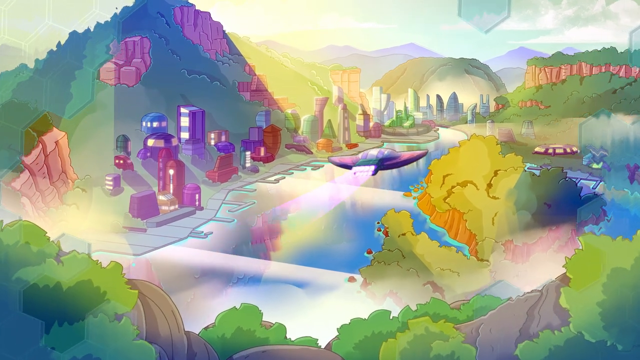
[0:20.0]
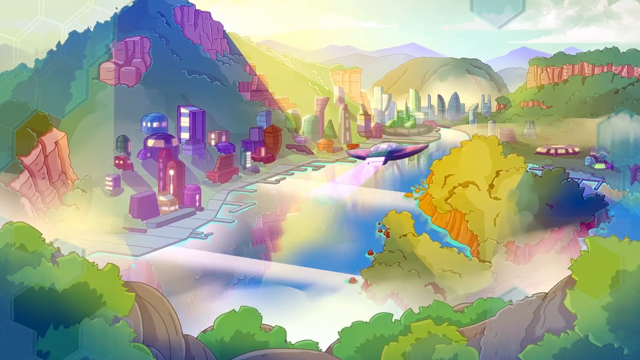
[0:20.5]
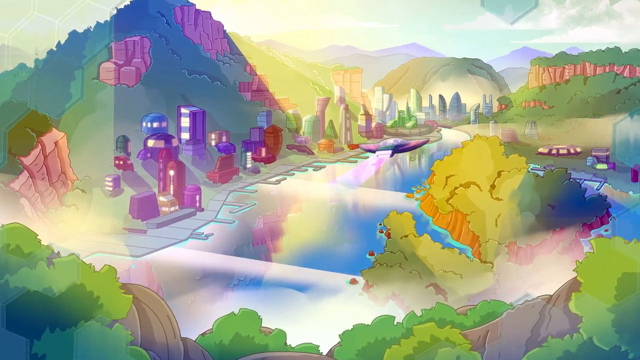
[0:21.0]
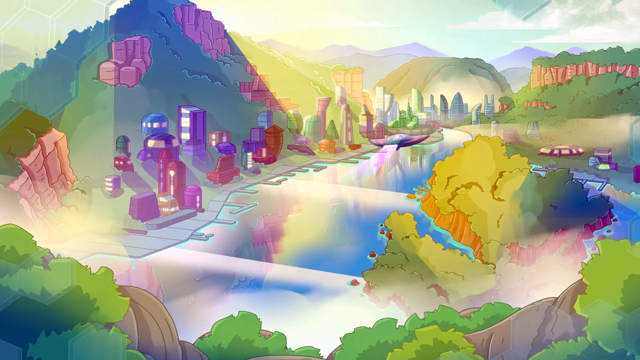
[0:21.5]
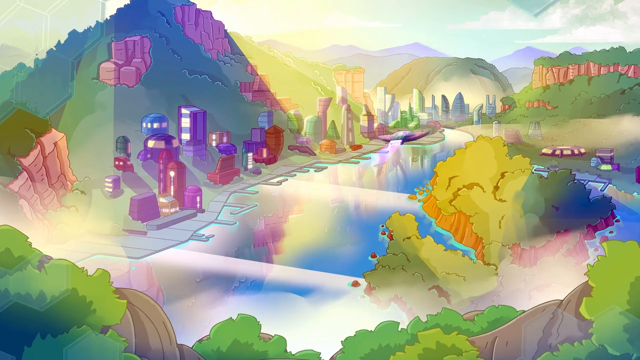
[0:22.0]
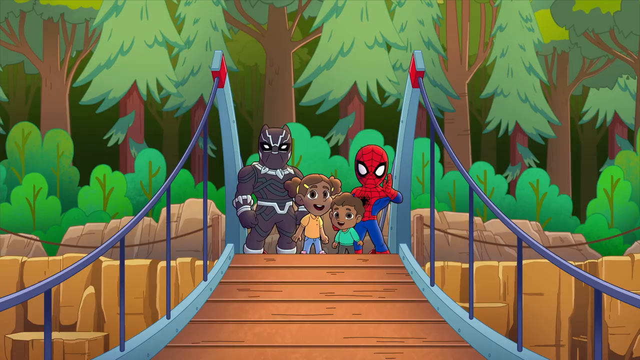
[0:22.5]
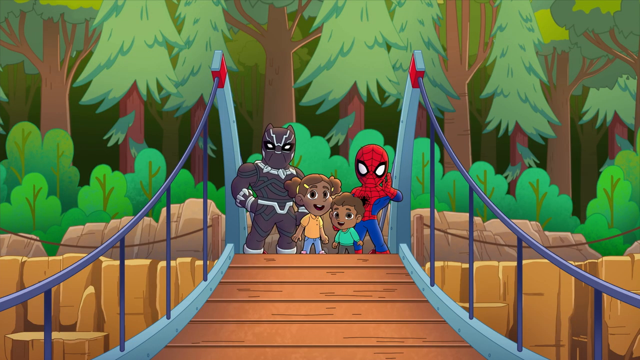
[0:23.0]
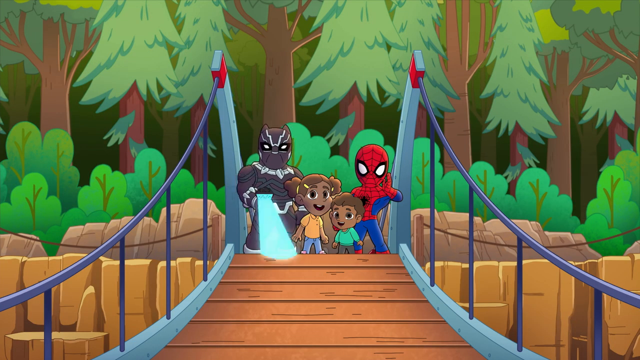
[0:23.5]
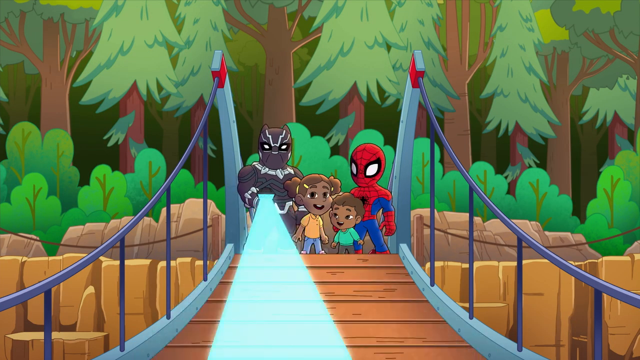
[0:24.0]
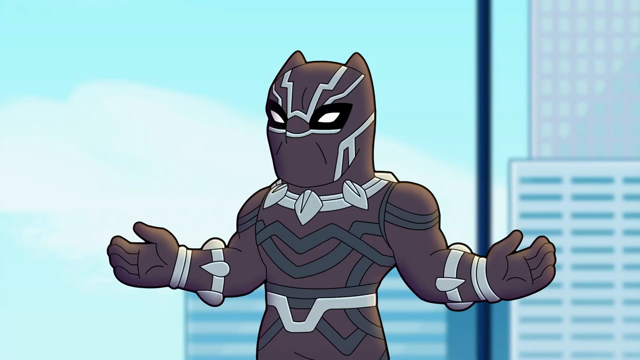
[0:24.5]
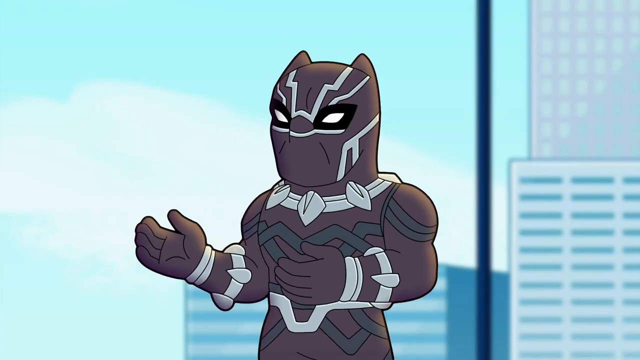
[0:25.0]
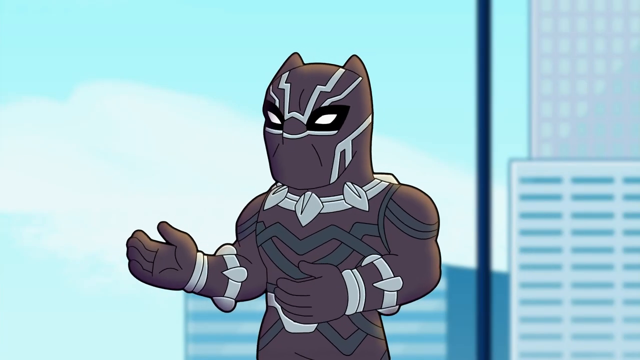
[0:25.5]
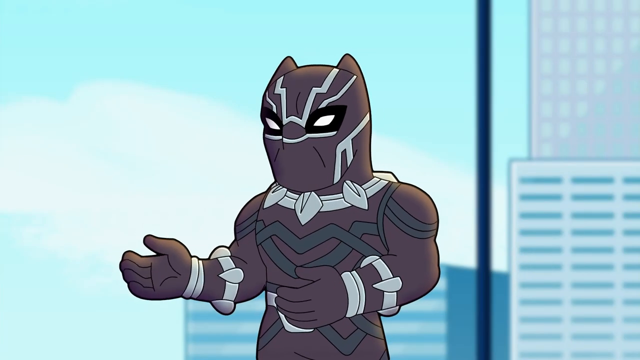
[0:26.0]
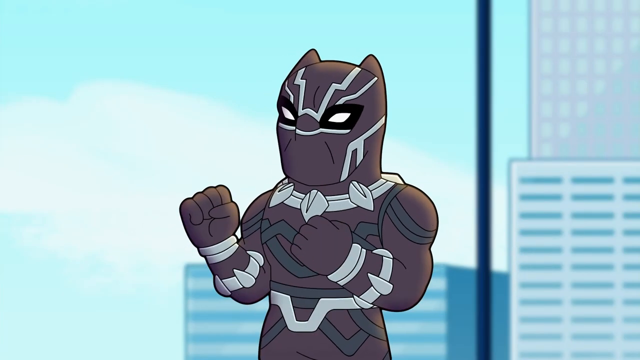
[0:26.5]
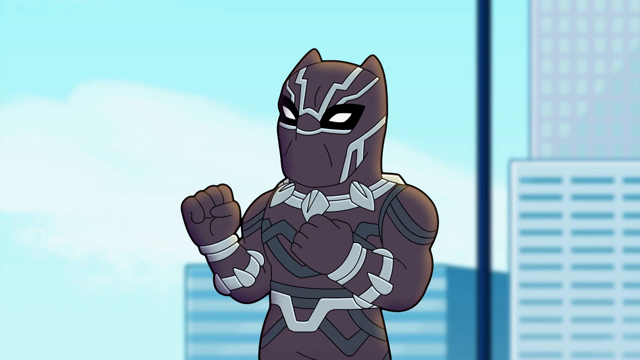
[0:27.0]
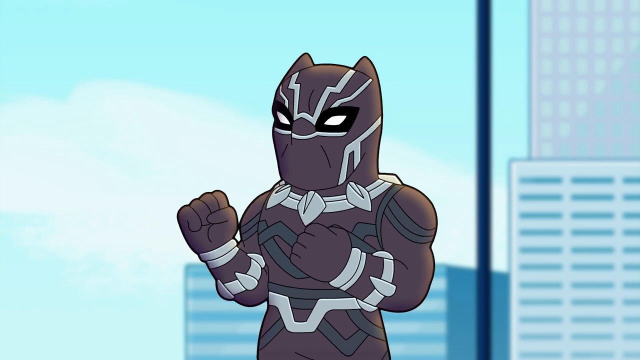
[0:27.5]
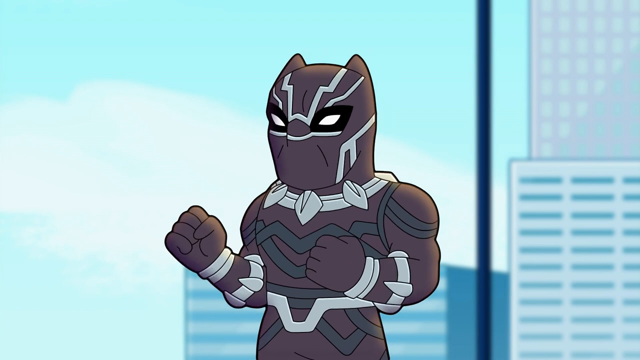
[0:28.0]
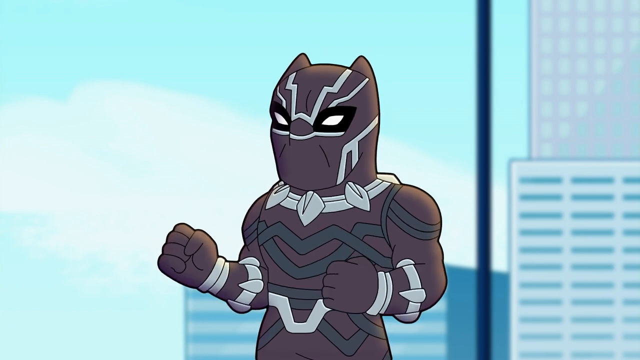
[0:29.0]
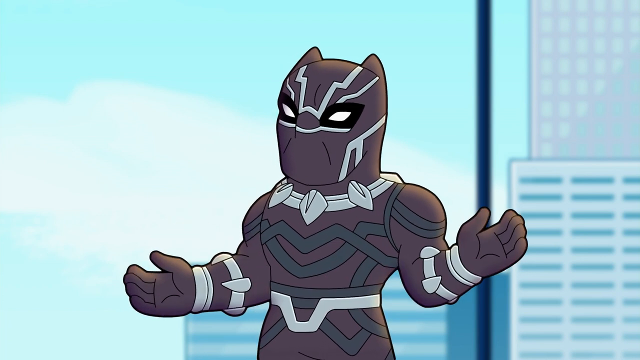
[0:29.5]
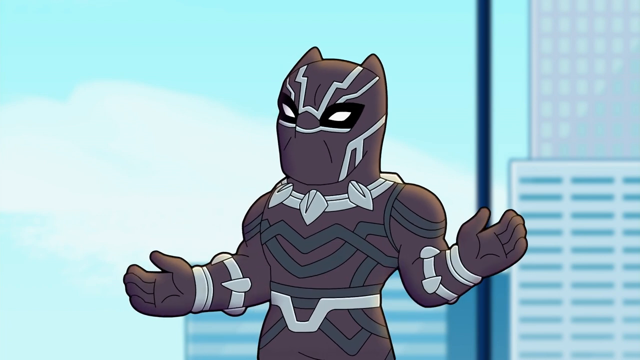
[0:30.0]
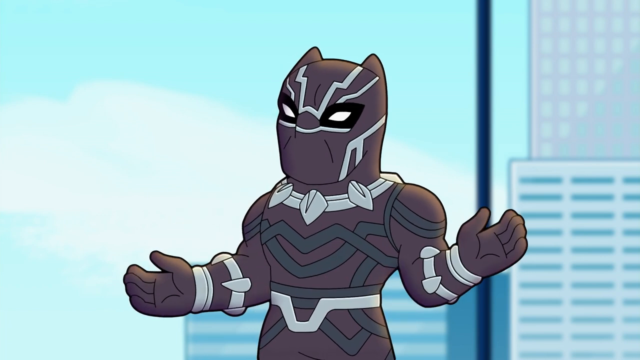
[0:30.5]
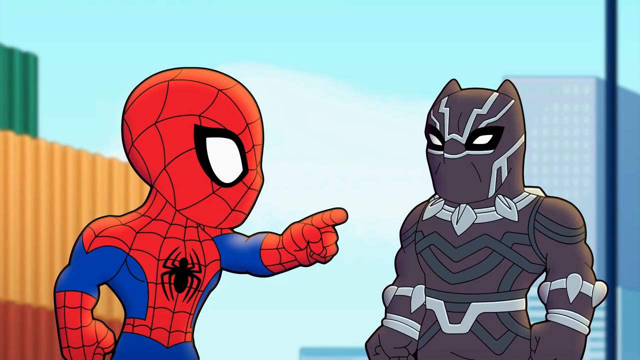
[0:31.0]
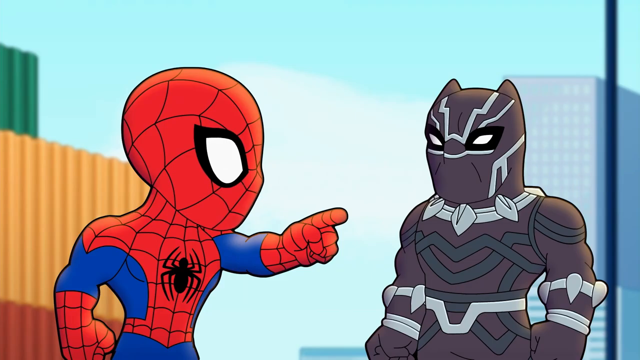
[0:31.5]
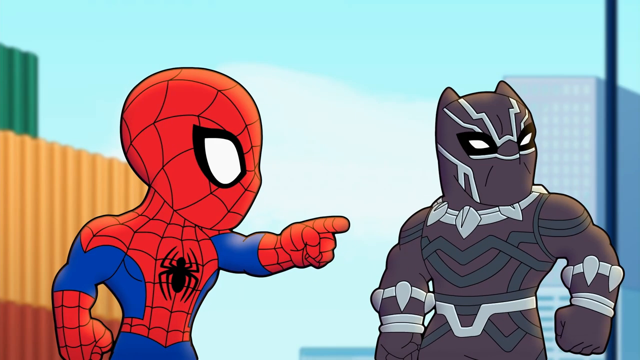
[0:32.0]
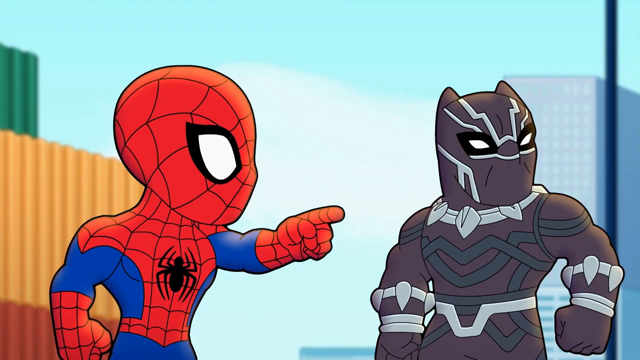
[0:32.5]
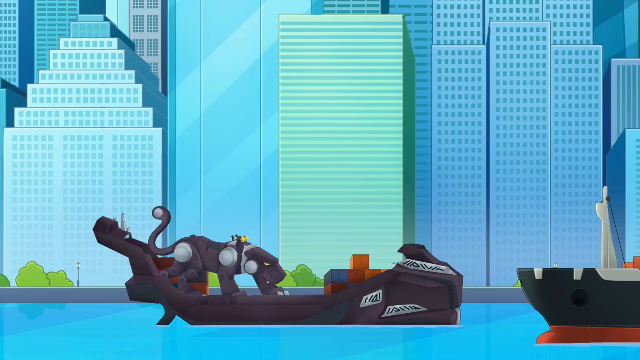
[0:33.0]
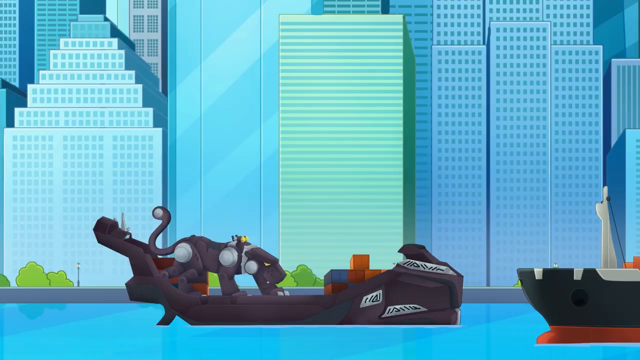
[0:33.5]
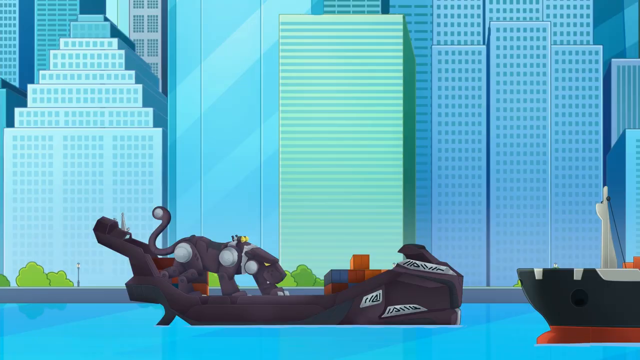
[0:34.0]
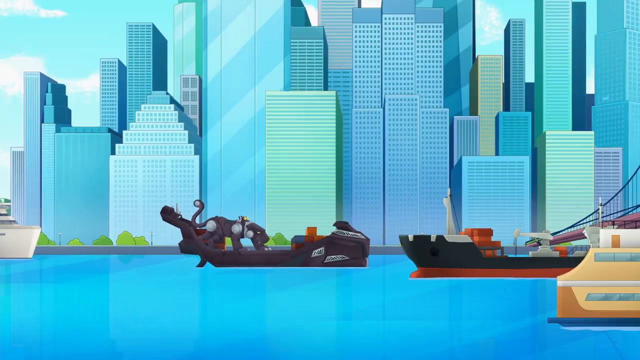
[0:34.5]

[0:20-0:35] Superhero characters appear: the little Spidey character talks to another character, and the ship flies down over the city. The scene switches to the second character, who wears dark maroon superhero clothing. The two are shown separately on screen several times, then suddenly together. No titling appears. The shots shift between Spidey and the other character together, the harbor, the other character walking along the harbor, the spaceship, and Spidey and the other character on a bridge with a couple of kids against a bright blue background in the city, seemingly the city the spaceship is moving toward. Spidey points off in the distance to a boat, and they look like they rush to the boat. Meanwhile another shot shows the spaceship flying toward the city, and the kids are on the bridge with the superheroes.